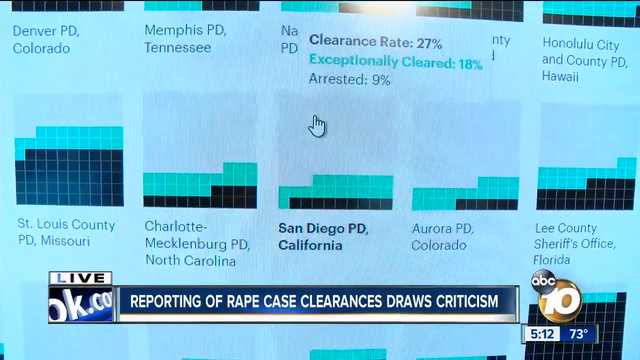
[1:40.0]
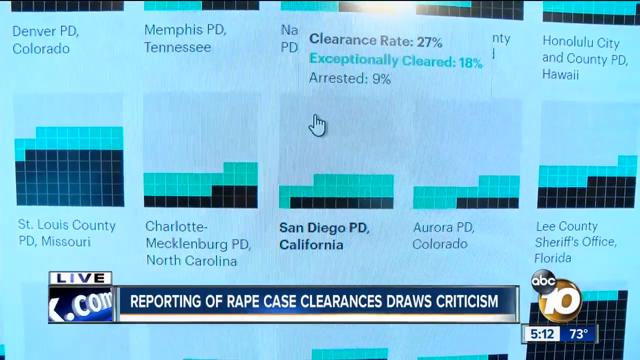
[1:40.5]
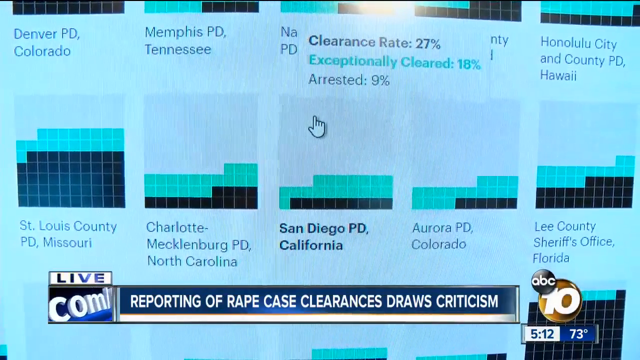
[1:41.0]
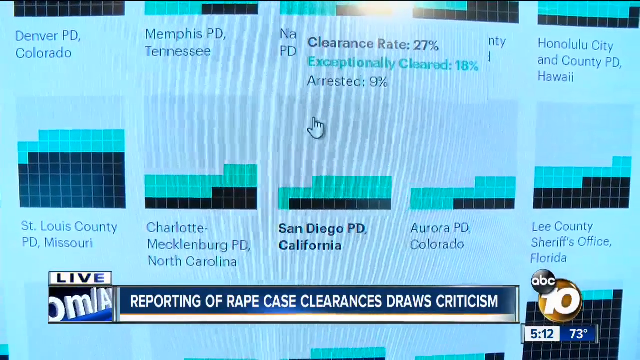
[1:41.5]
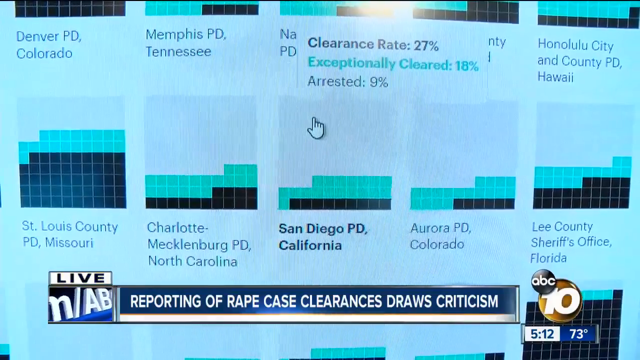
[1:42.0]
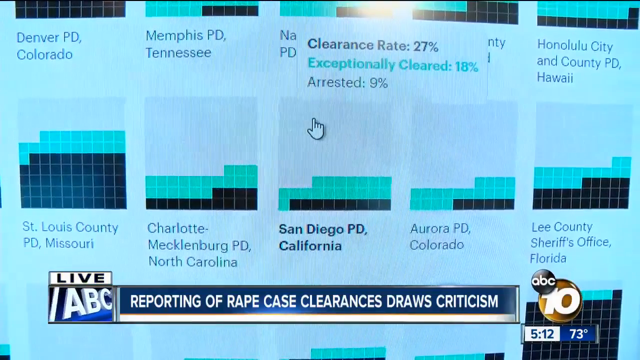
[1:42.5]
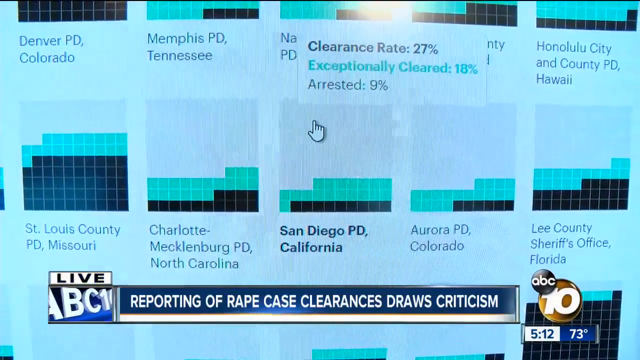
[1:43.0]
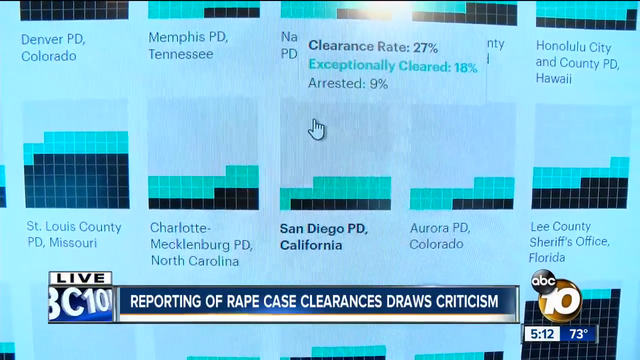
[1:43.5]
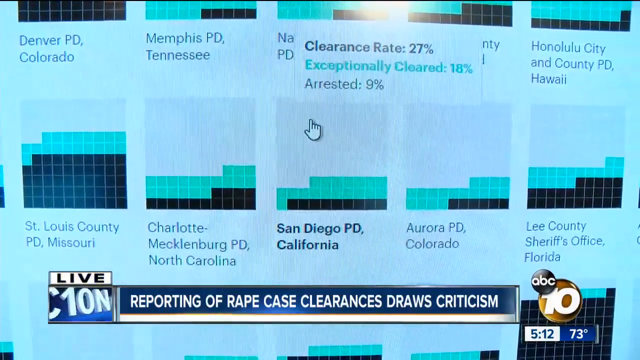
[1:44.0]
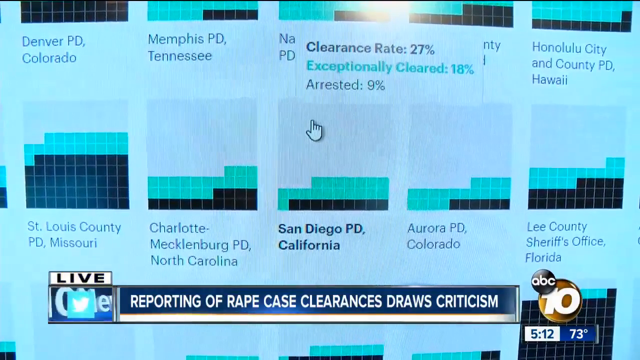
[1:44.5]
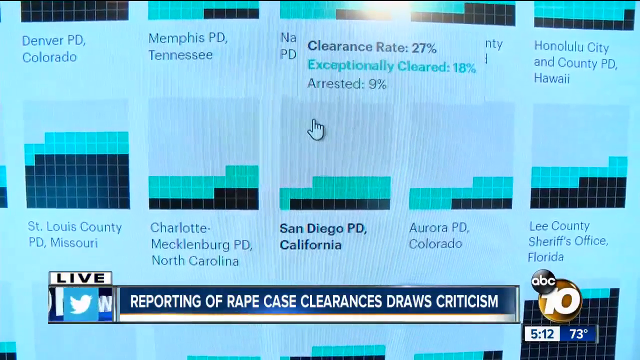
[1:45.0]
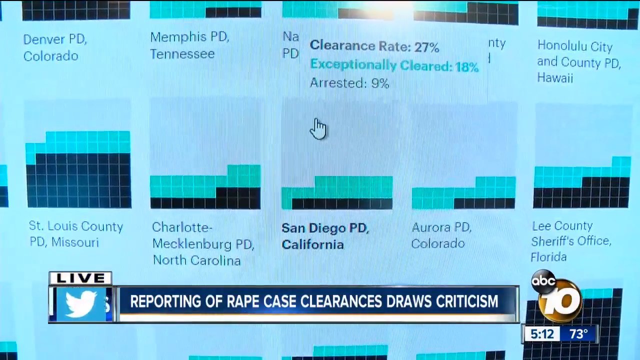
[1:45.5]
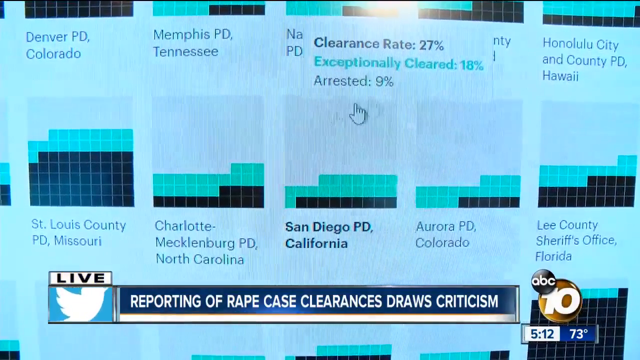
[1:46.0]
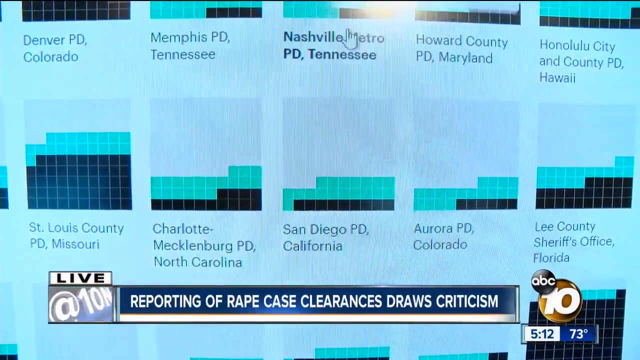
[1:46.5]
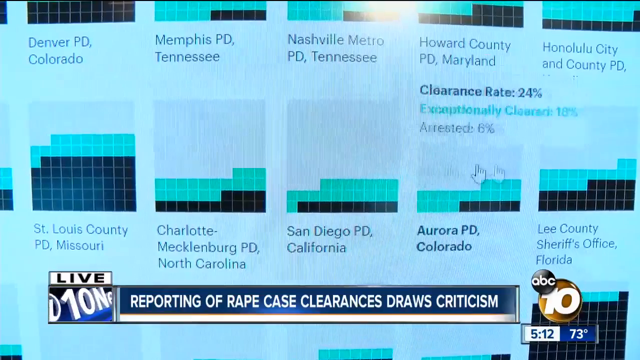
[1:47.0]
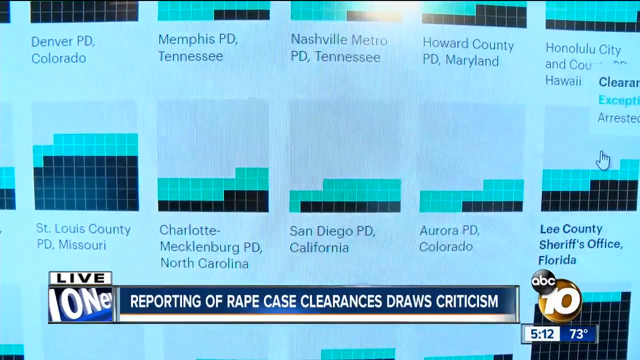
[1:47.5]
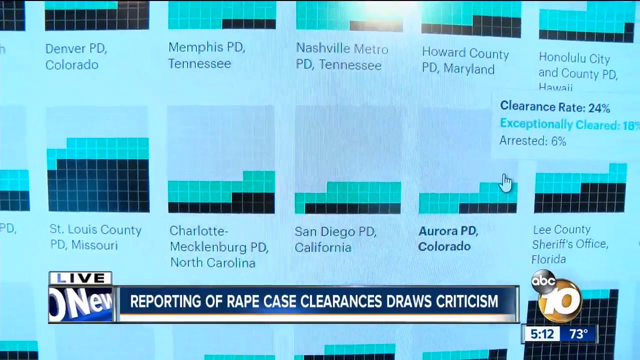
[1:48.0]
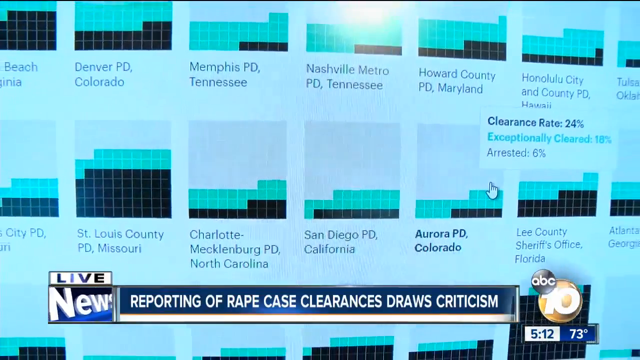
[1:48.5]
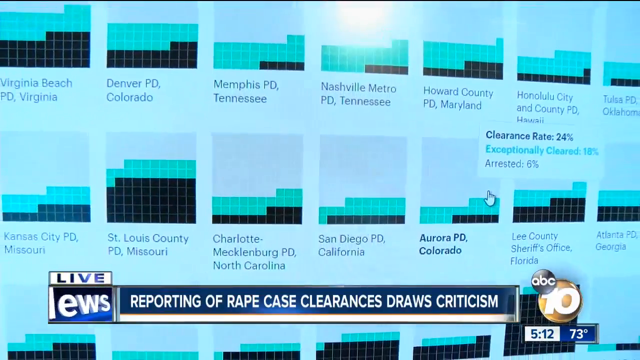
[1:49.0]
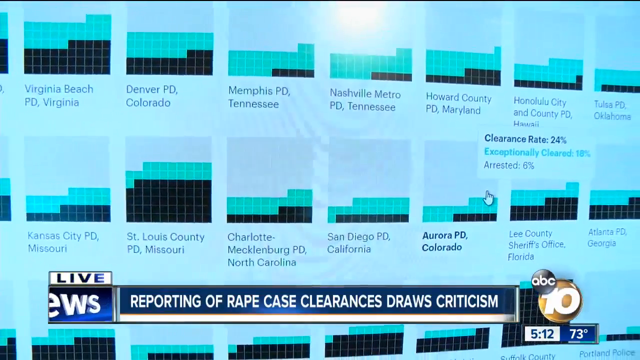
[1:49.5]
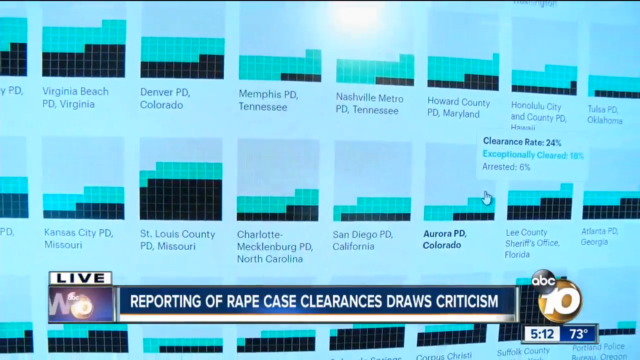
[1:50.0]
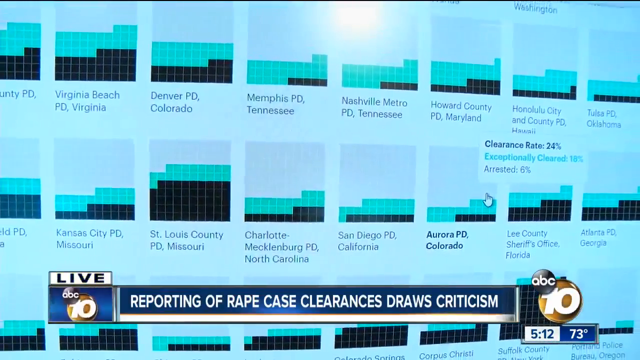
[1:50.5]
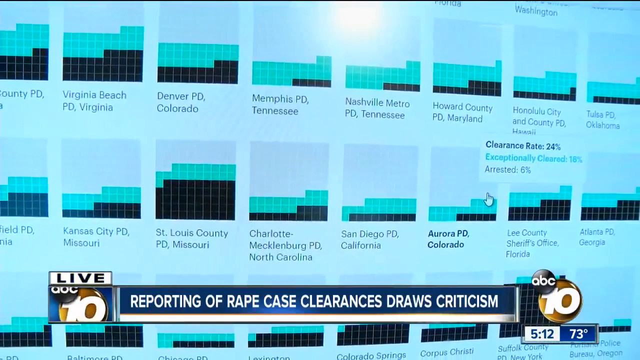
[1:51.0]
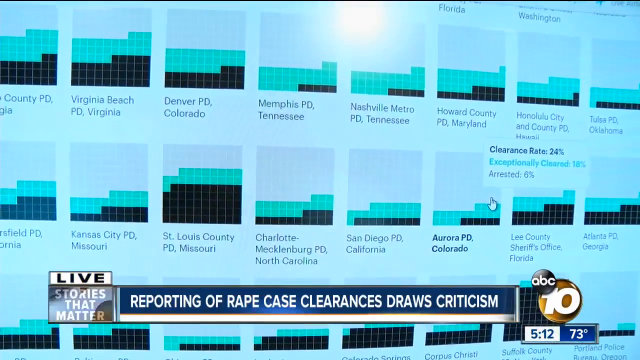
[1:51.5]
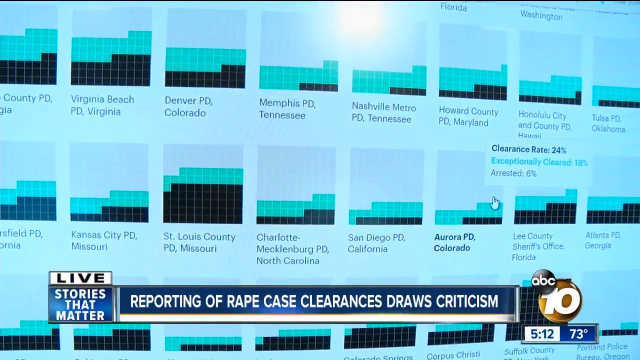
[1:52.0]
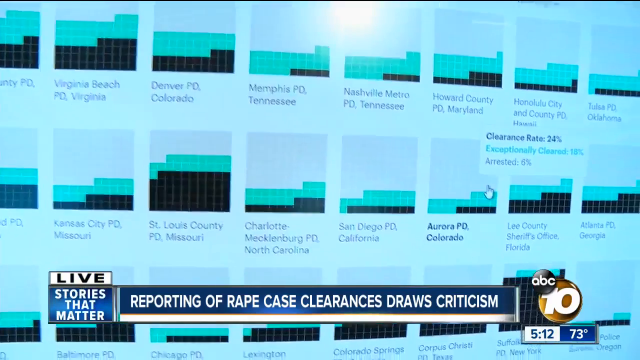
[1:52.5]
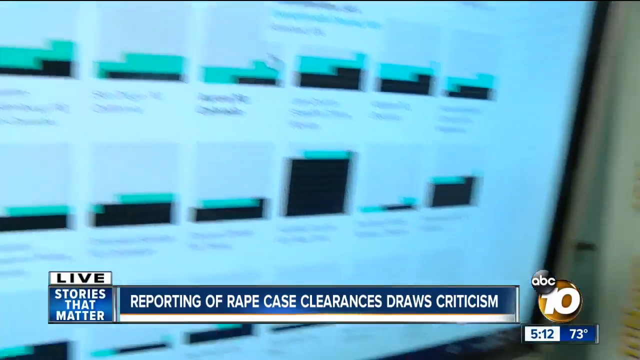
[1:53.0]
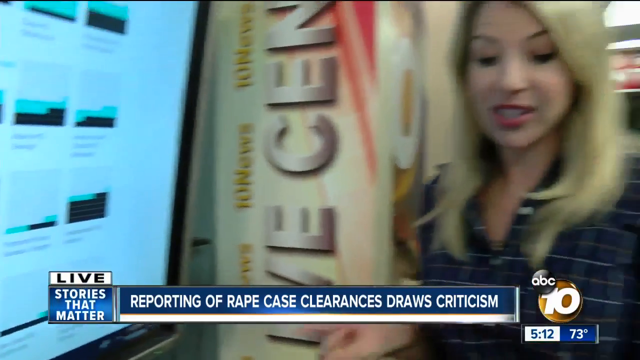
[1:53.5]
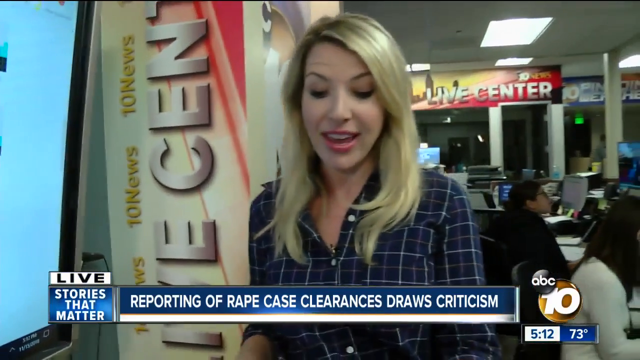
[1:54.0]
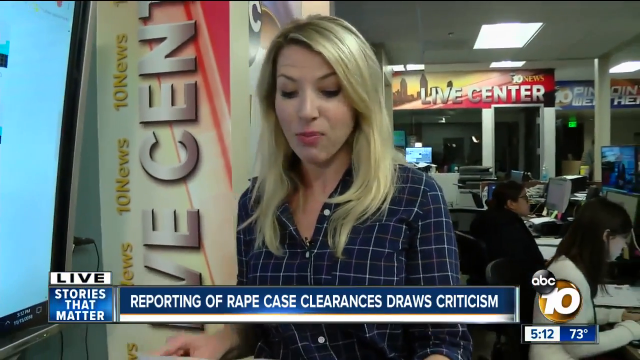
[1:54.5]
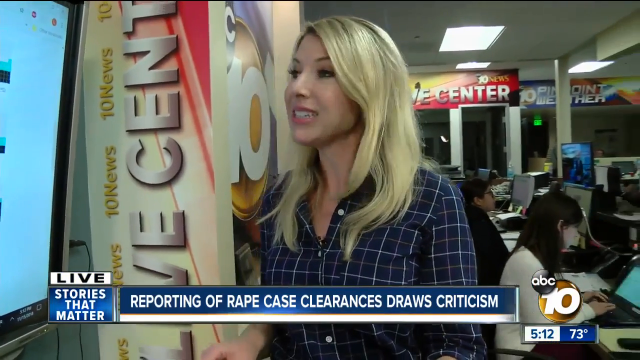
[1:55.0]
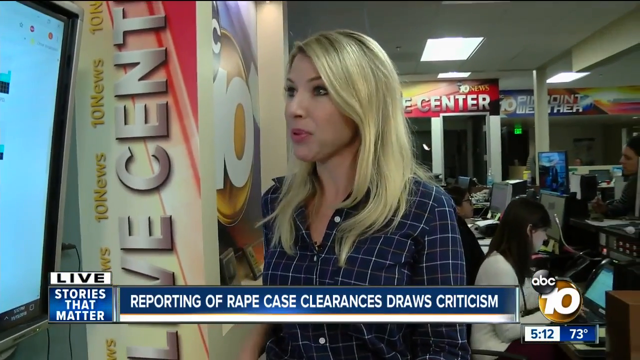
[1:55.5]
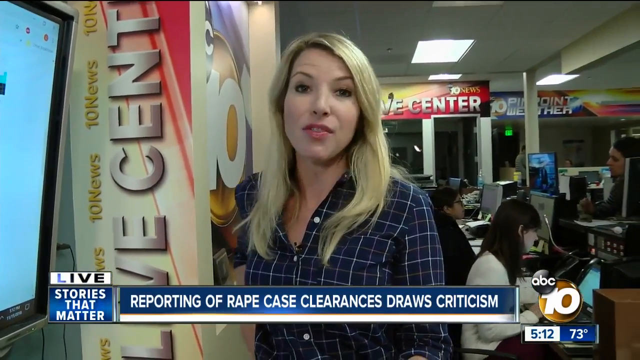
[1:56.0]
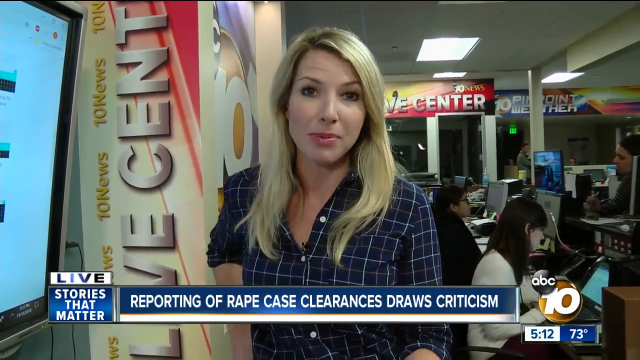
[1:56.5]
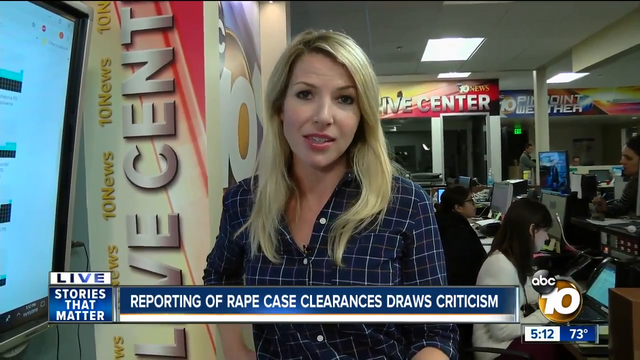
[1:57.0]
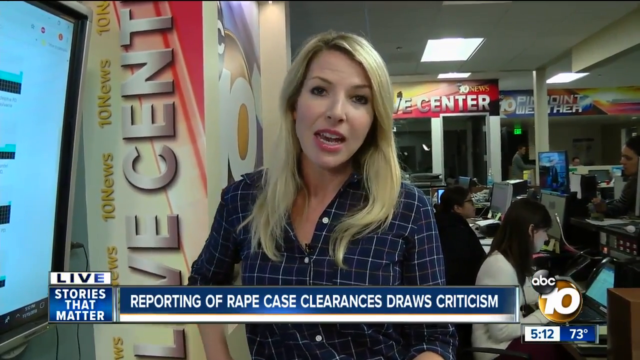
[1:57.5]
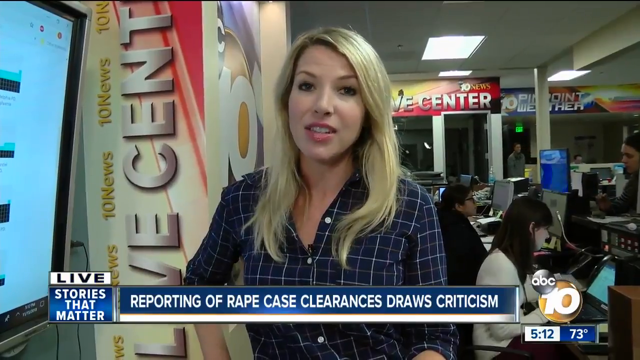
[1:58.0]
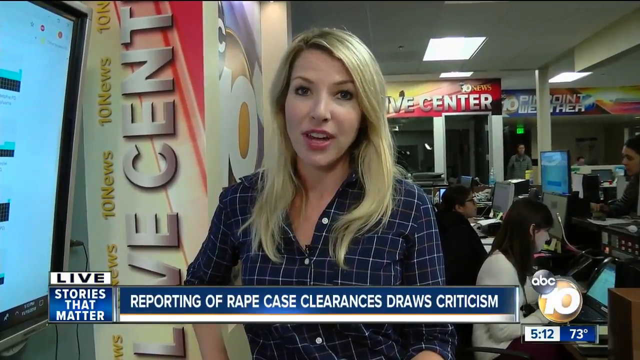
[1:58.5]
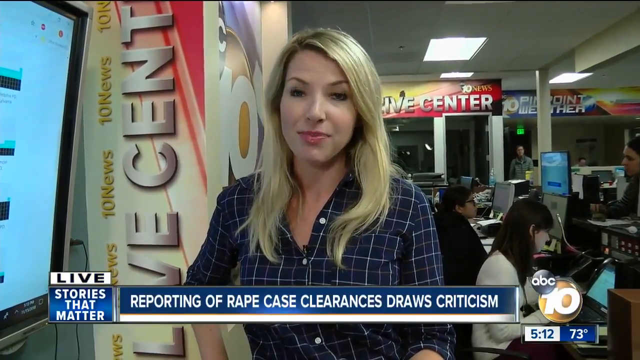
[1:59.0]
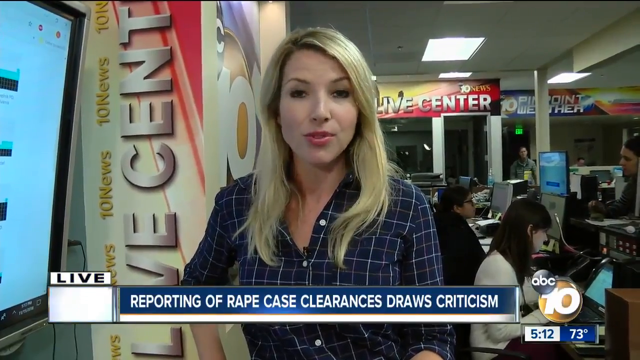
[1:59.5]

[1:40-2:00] A woman reports, presenting statistics on how each police department performs, with the clearance rate higher than the arrest rate for almost every department. One set of figures shows a 27% clearance rate and 18% exceptionally cleared; another shows a clearance rate of 24%, 18% exceptionally cleared, and an arrest rate of 16%.